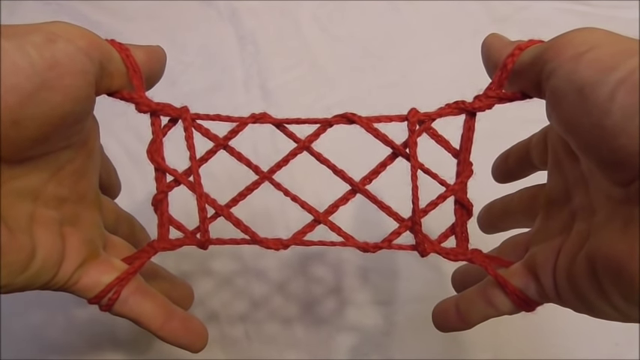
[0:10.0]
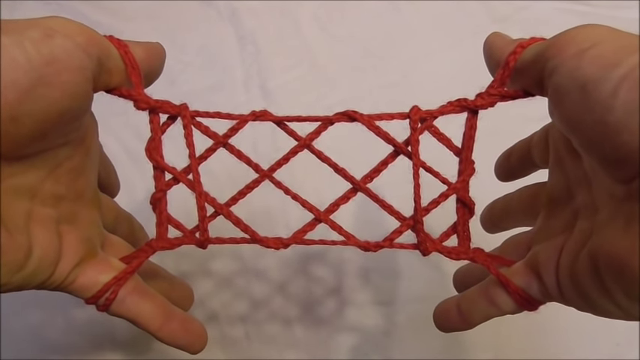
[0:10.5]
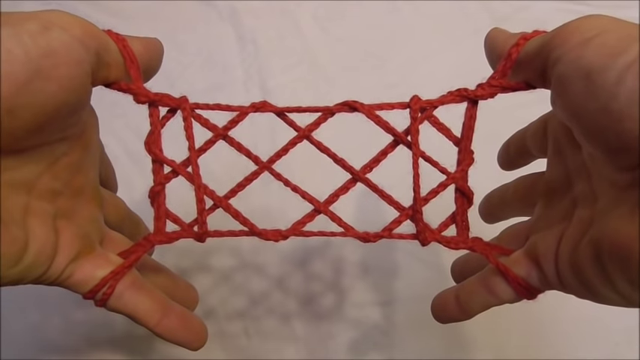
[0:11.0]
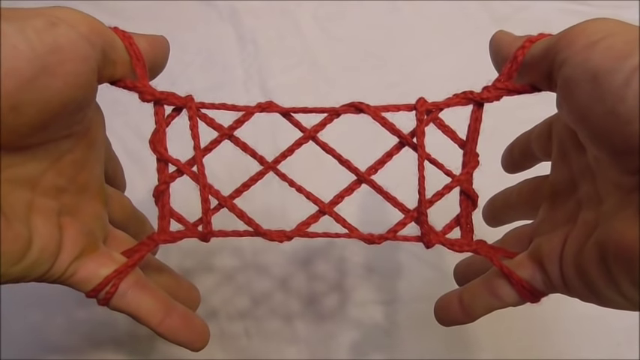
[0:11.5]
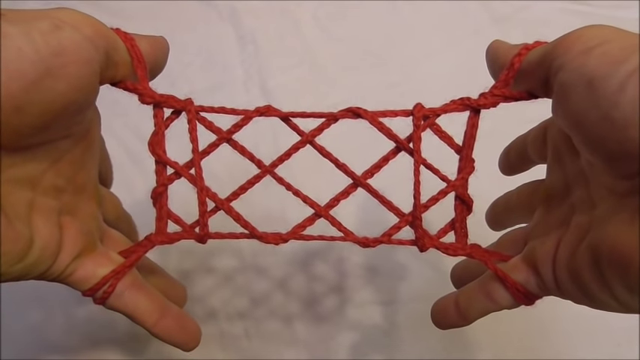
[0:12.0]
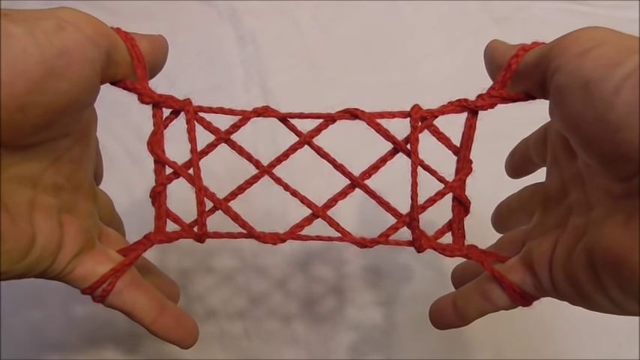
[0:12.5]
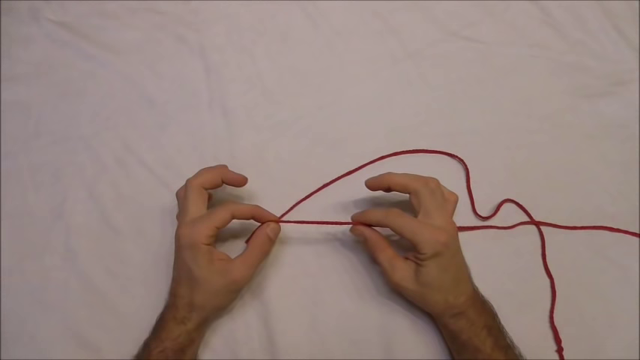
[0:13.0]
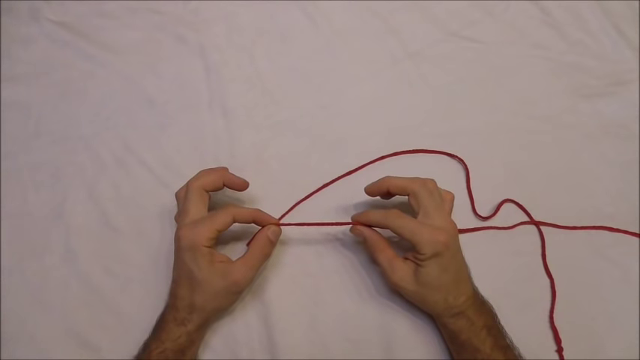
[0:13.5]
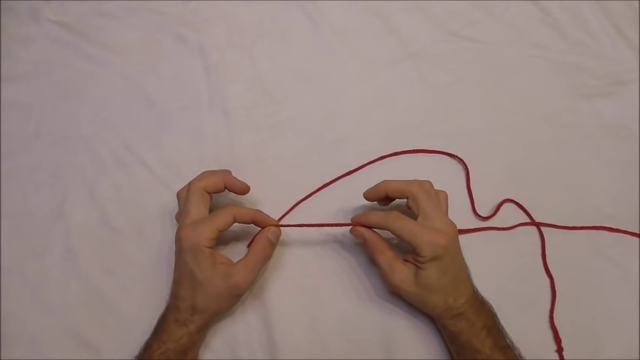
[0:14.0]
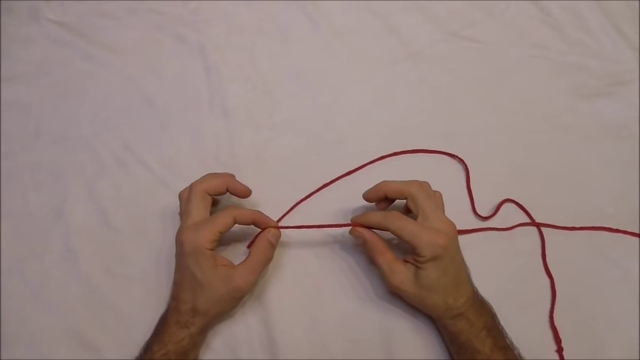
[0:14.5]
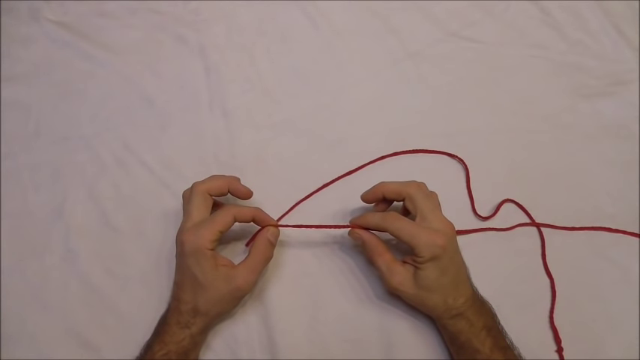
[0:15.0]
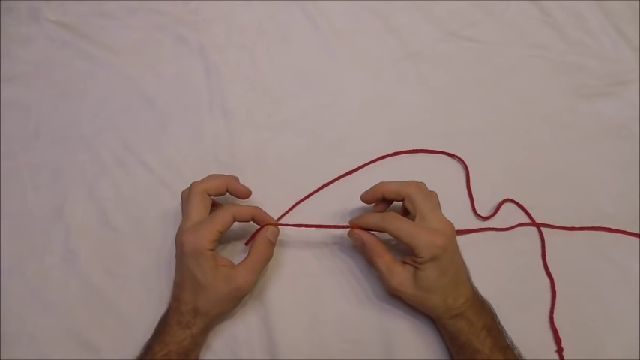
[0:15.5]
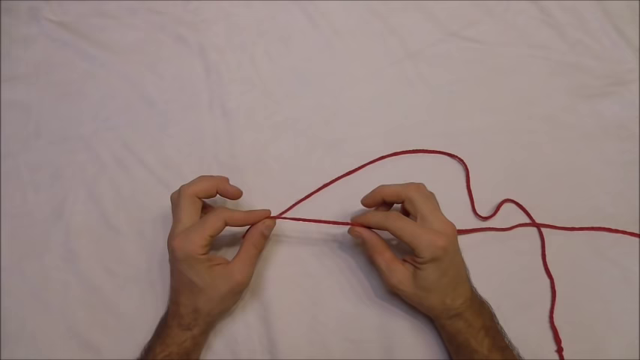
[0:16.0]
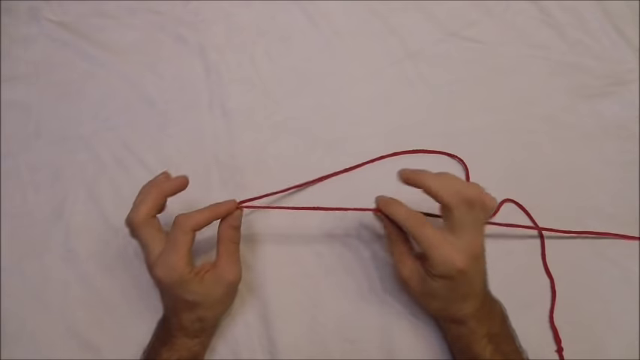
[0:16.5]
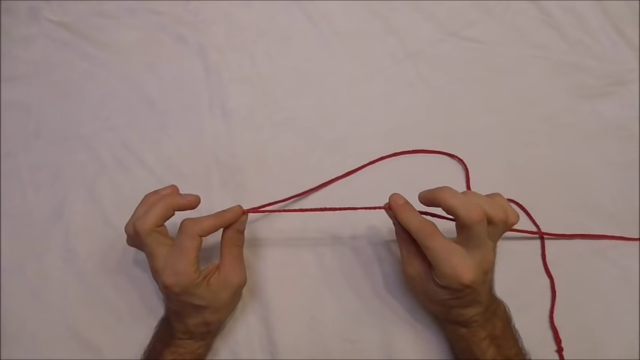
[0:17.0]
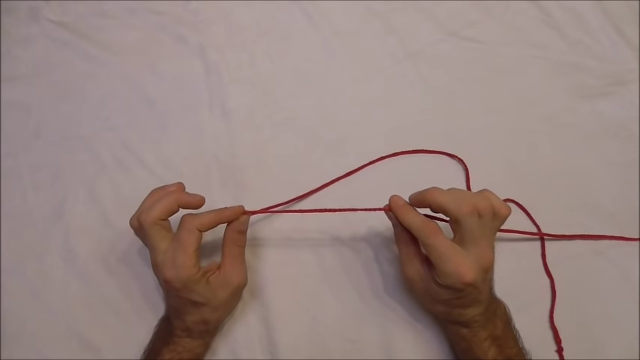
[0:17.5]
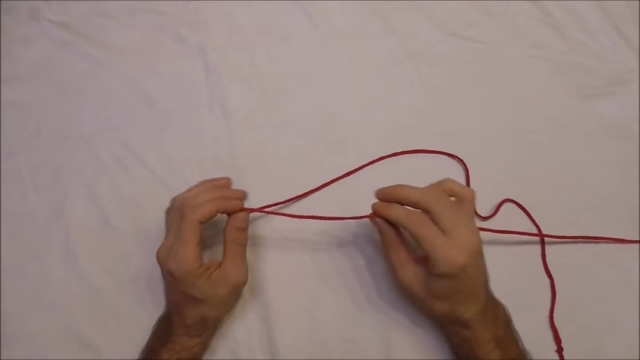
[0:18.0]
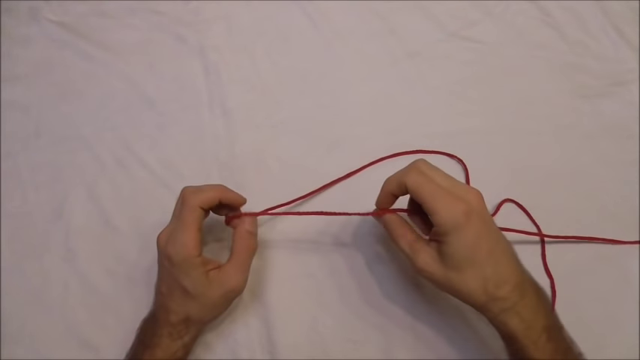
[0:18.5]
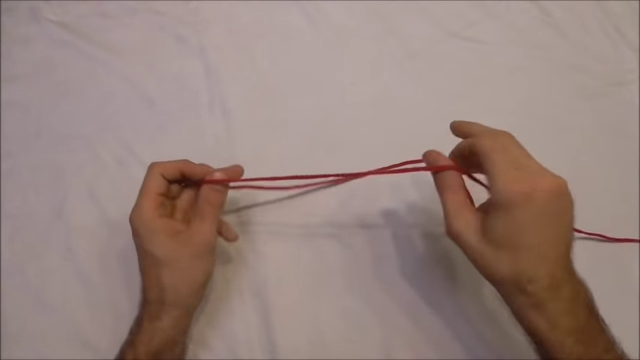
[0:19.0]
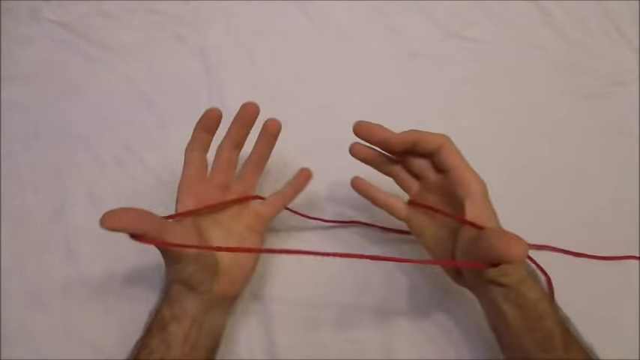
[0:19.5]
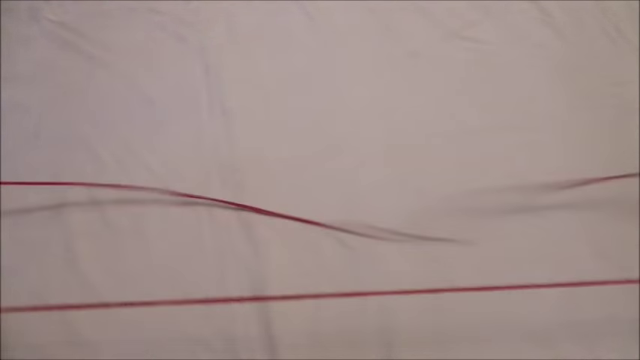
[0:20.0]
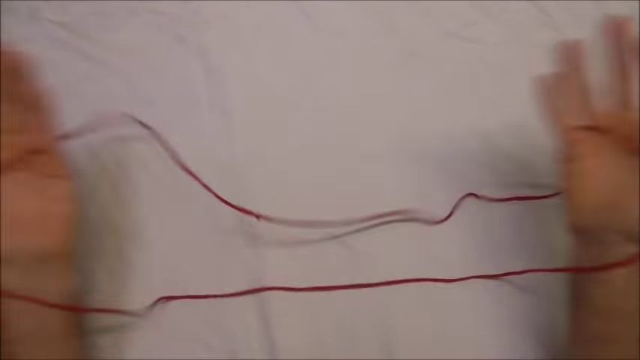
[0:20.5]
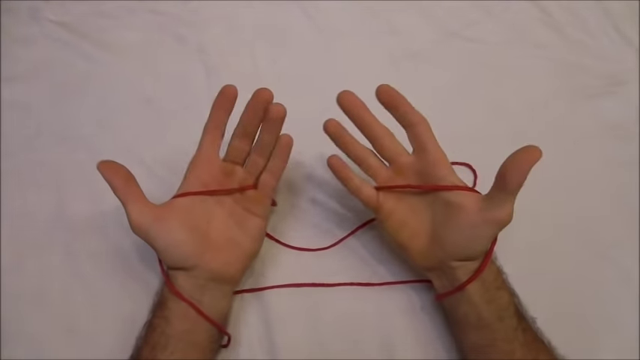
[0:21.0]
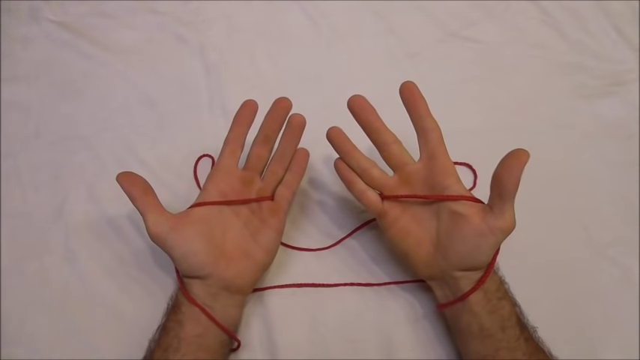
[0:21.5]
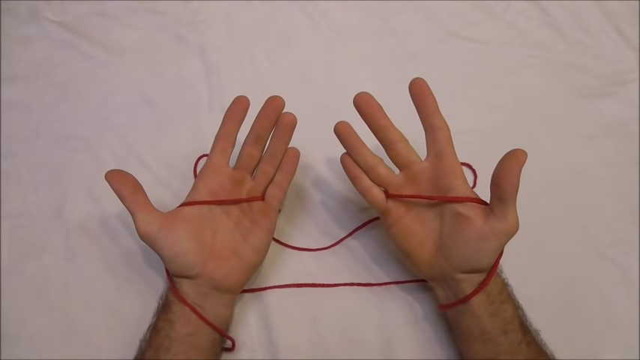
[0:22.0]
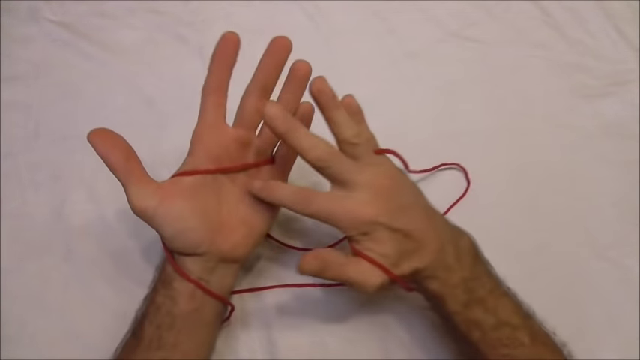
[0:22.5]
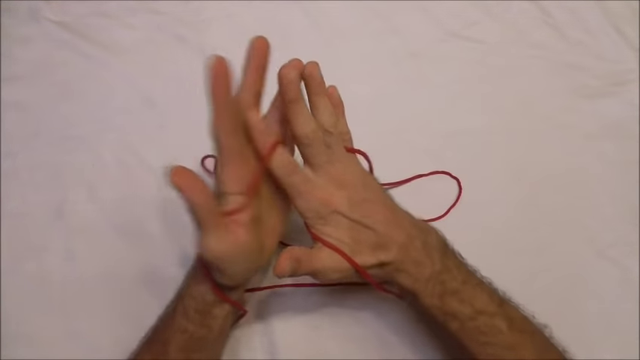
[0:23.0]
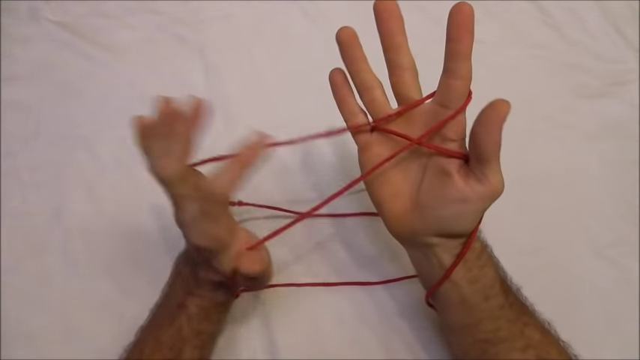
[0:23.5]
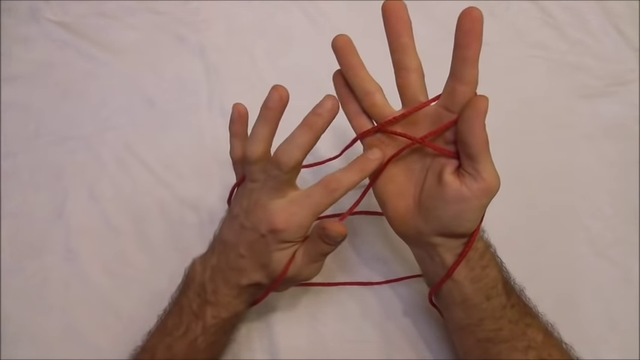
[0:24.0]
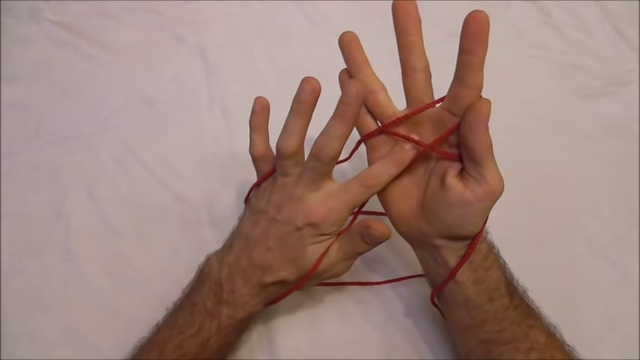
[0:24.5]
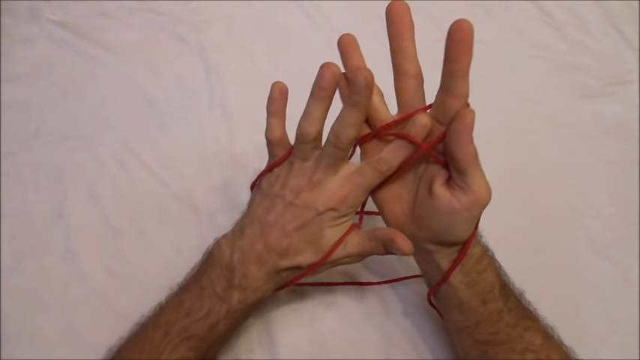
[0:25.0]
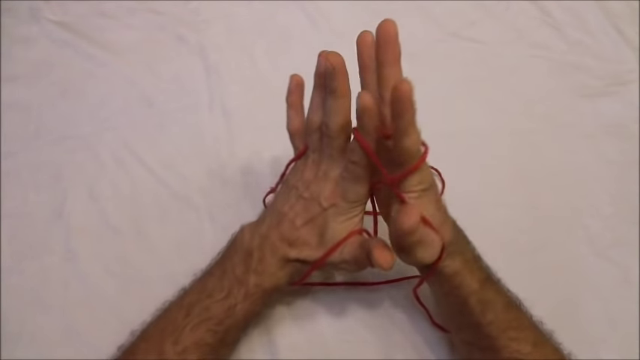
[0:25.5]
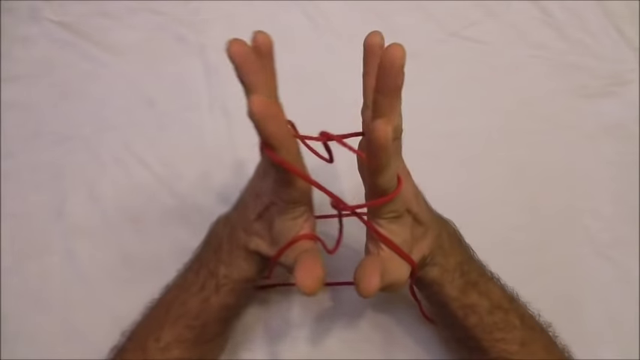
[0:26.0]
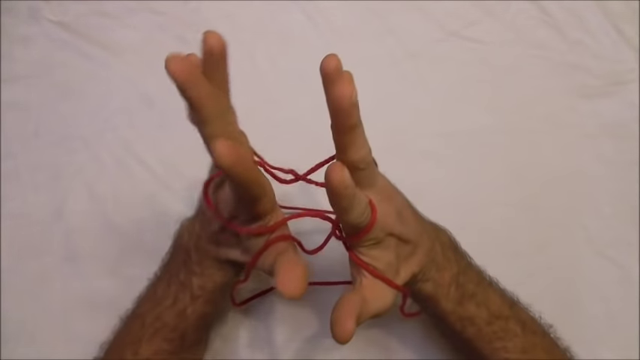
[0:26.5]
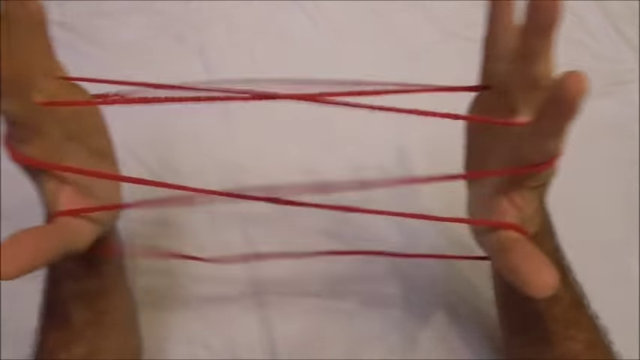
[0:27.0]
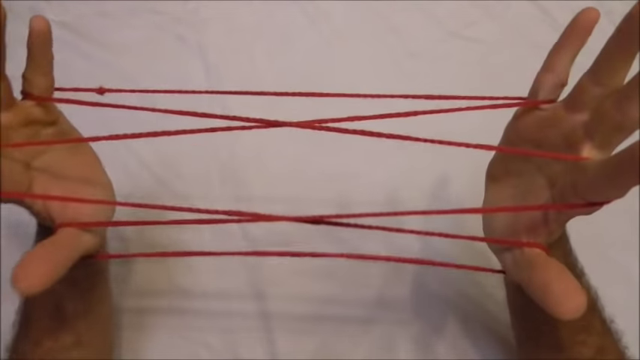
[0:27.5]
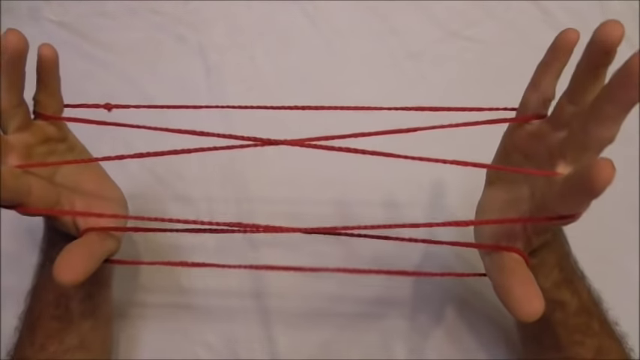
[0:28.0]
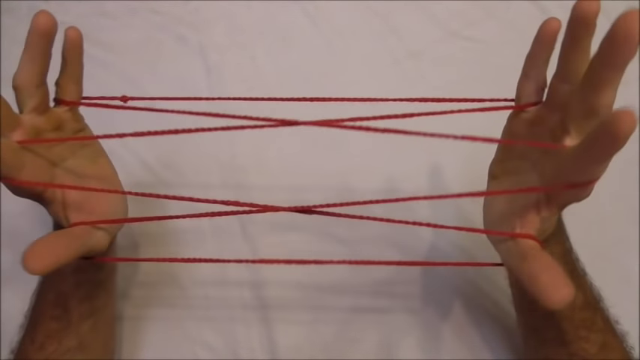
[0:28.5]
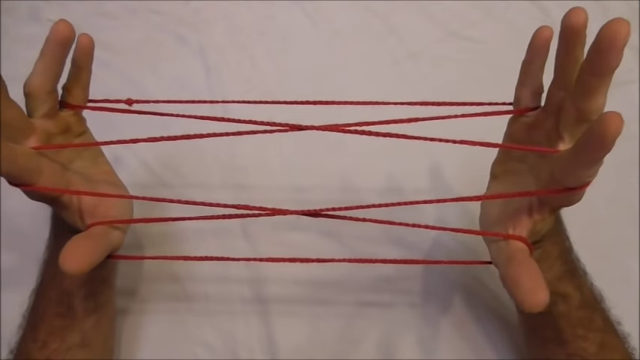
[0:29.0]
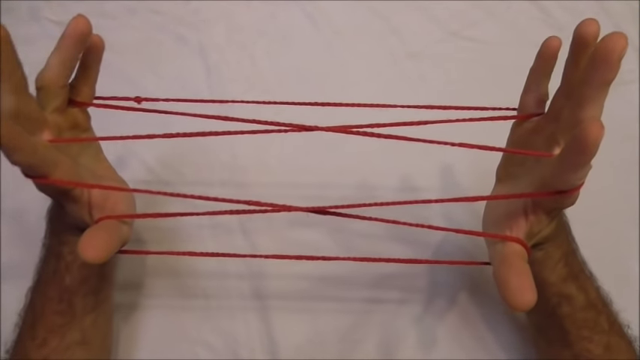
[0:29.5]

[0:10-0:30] The two hands continue to hold the red crocheted pattern between them against the same white fluffy background. The scene then transitions to a new shot with the white fluffy background still there. The hands are now holding a red yarn string on the left and right sides; the string is long and runs off camera to the right and the bottom of the screen. He picks up the string with his thumbs and one of his fingers. With the string between his hands, he makes a quick motion to the left and right, and the string comes together to form a circle between his hands. He inserts one finger of his right hand into the middle, then does the same with his left hand, and pulls his hands apart to create a pattern.